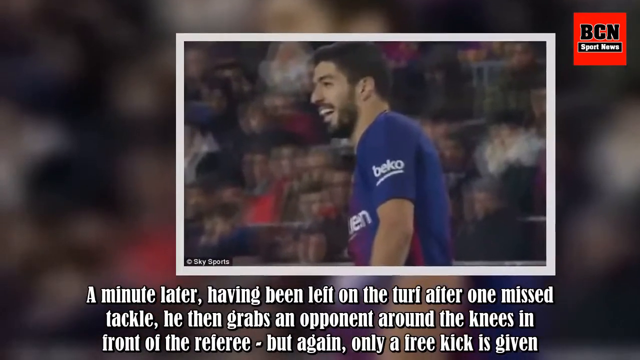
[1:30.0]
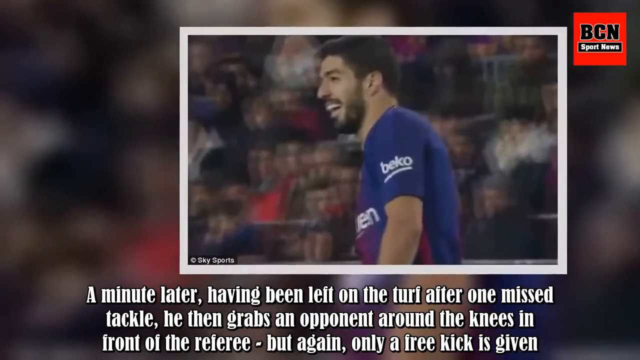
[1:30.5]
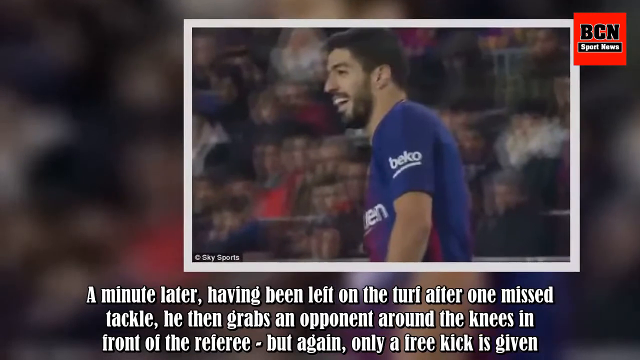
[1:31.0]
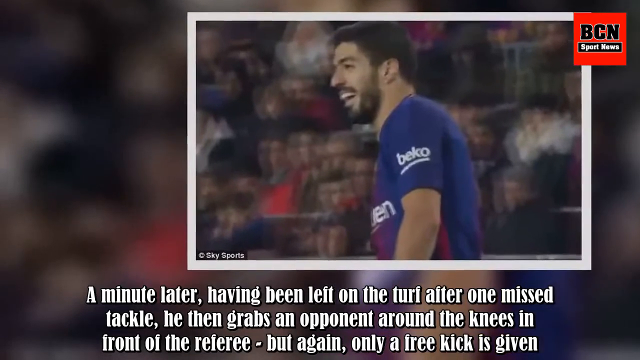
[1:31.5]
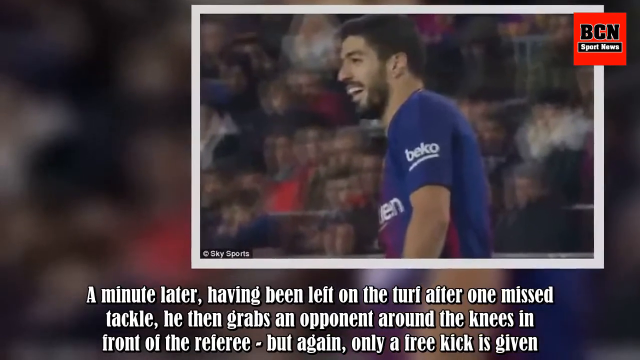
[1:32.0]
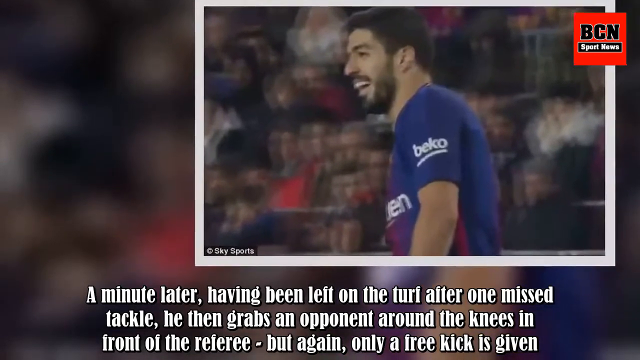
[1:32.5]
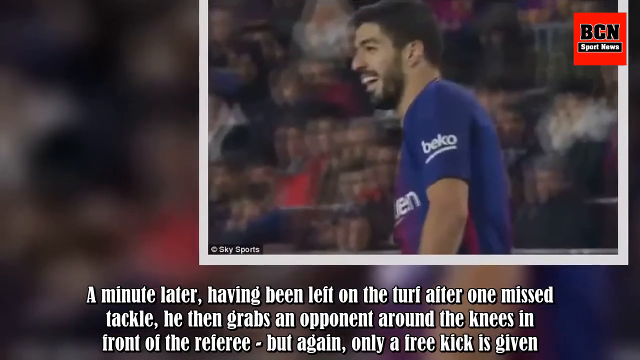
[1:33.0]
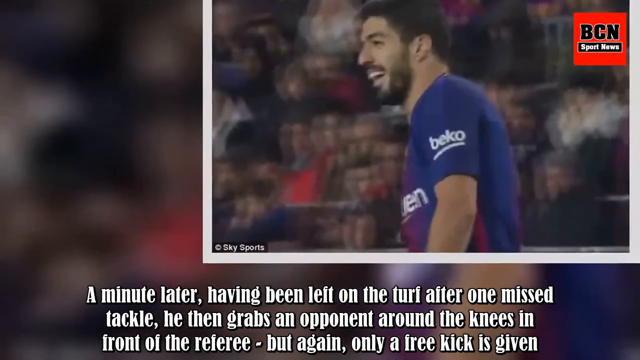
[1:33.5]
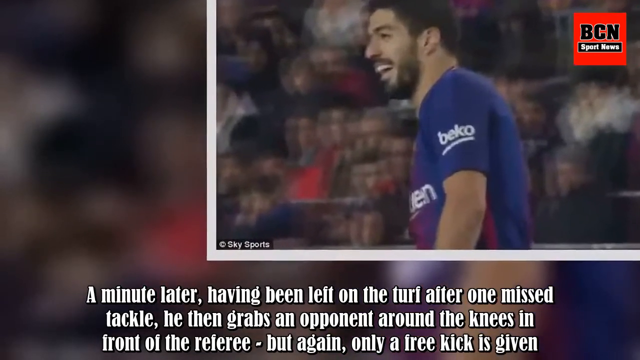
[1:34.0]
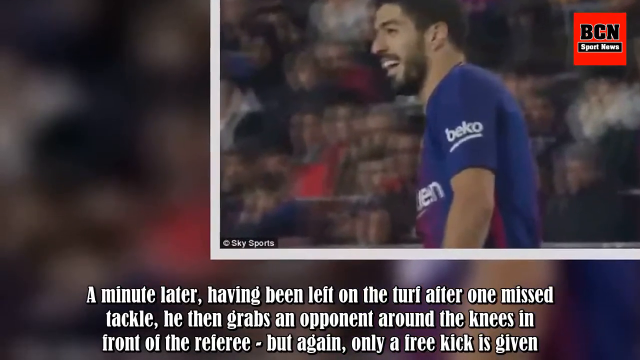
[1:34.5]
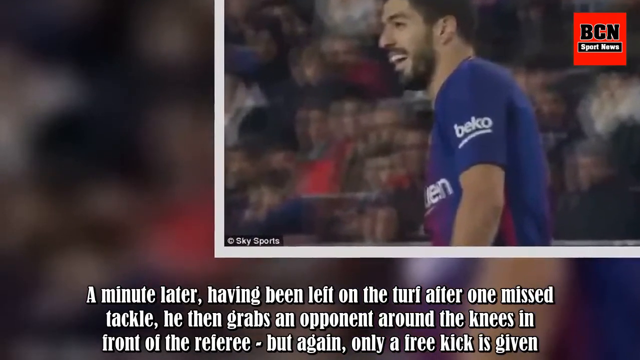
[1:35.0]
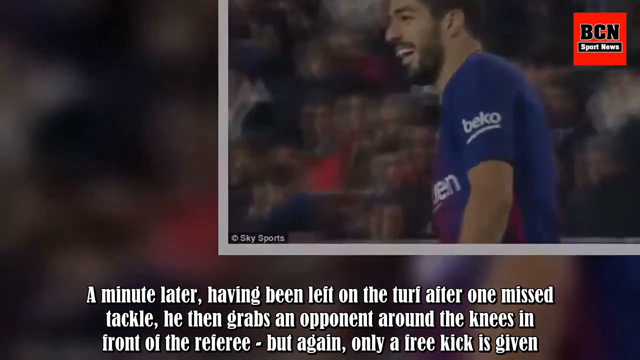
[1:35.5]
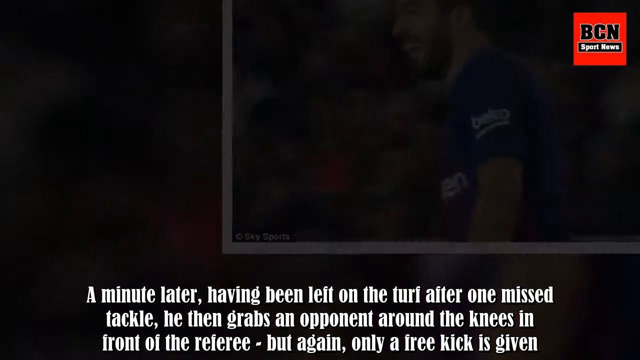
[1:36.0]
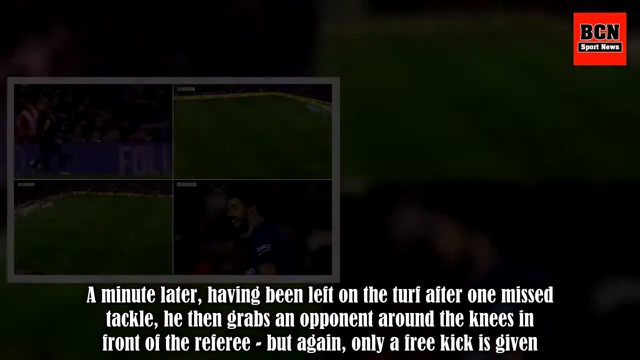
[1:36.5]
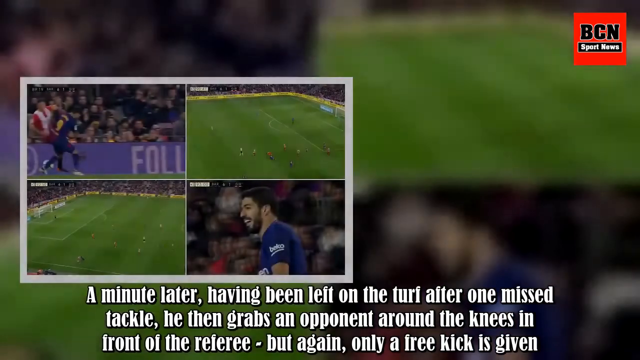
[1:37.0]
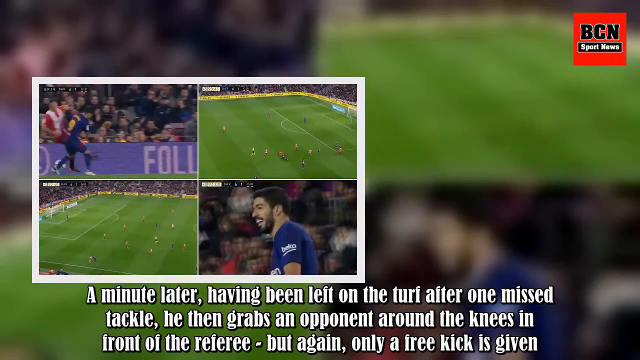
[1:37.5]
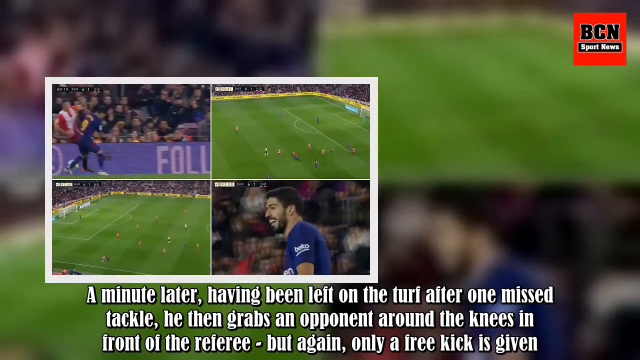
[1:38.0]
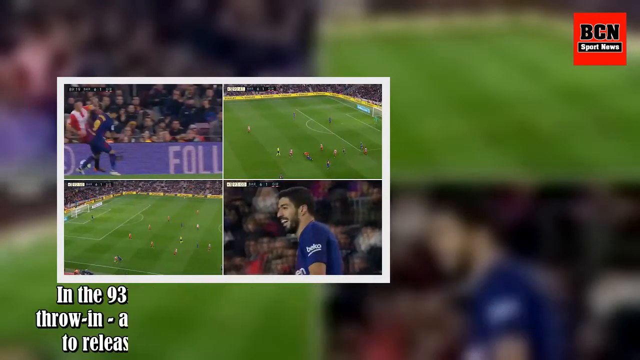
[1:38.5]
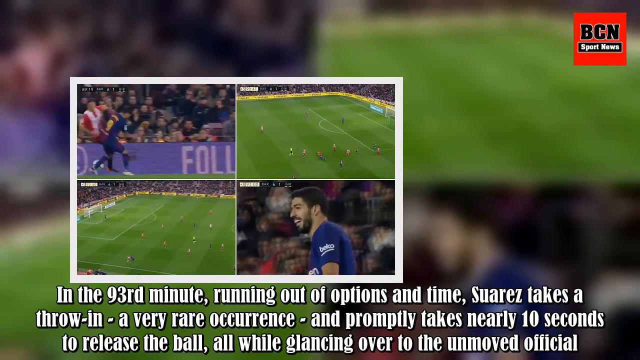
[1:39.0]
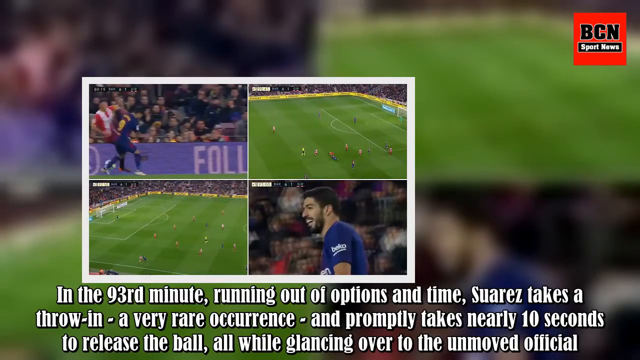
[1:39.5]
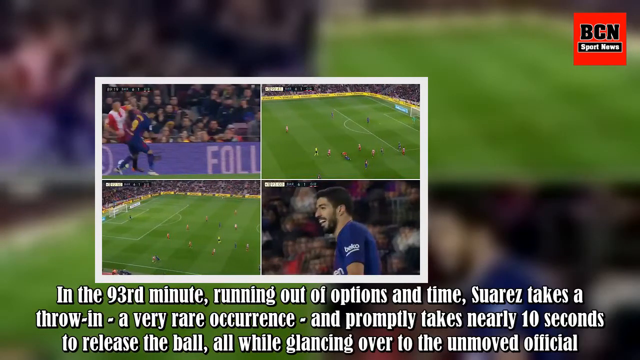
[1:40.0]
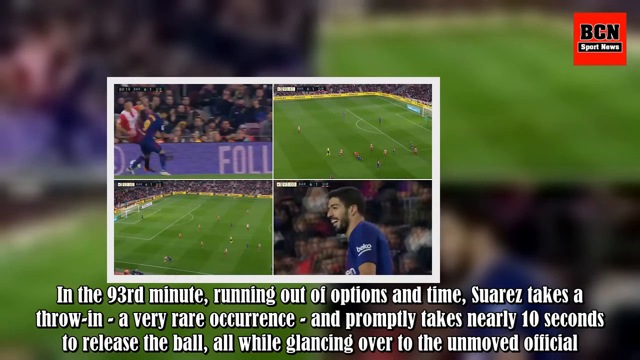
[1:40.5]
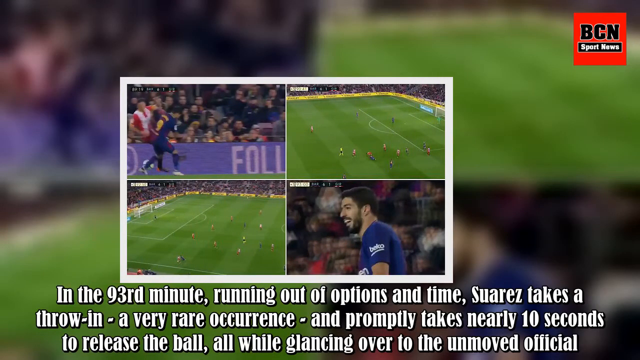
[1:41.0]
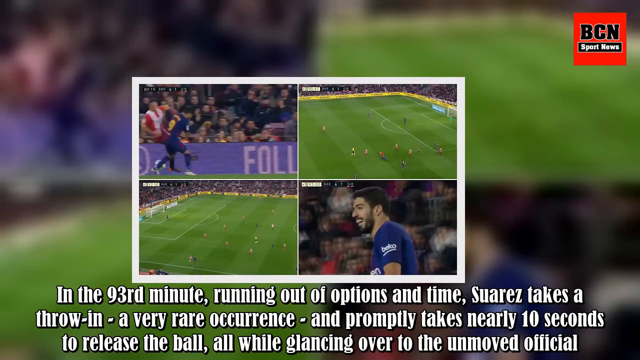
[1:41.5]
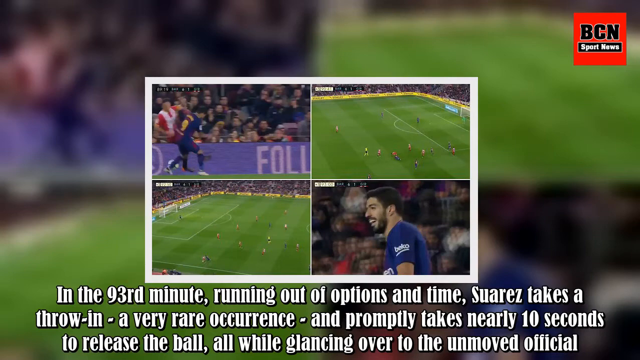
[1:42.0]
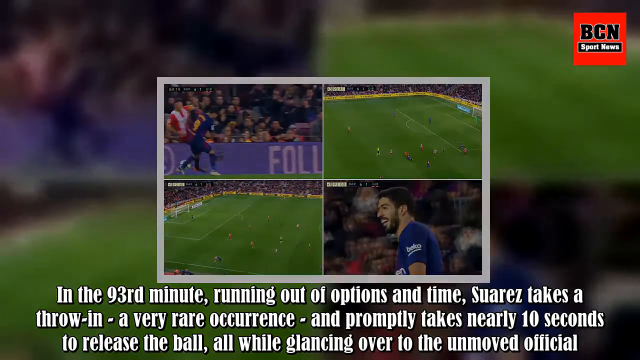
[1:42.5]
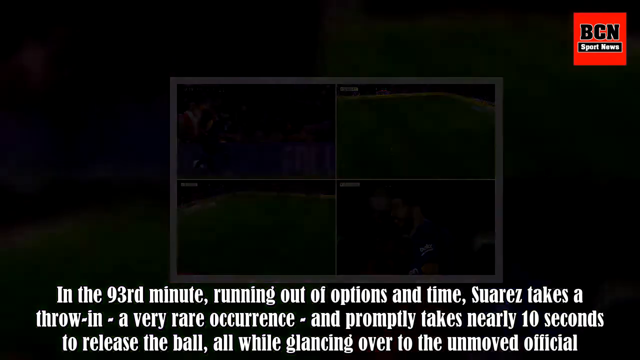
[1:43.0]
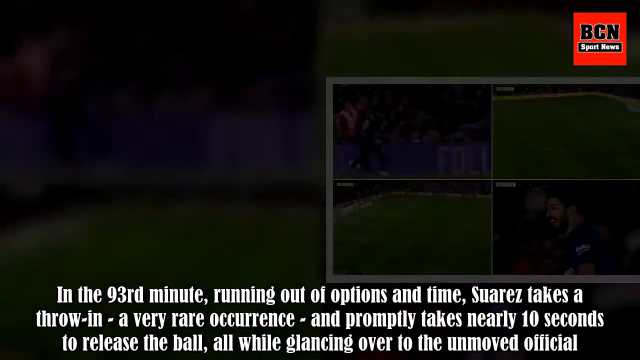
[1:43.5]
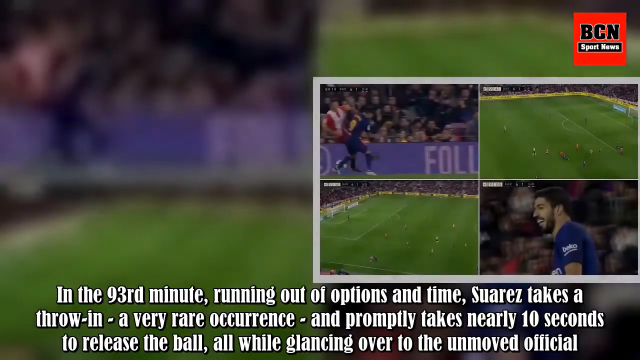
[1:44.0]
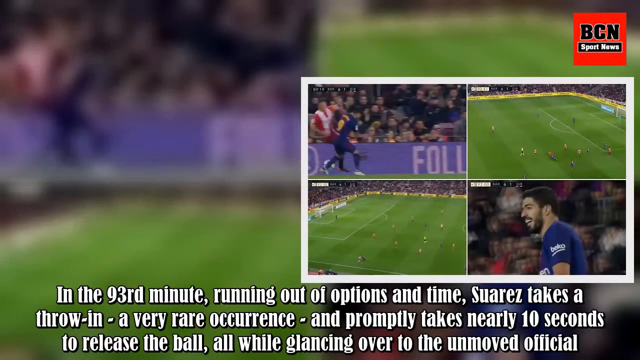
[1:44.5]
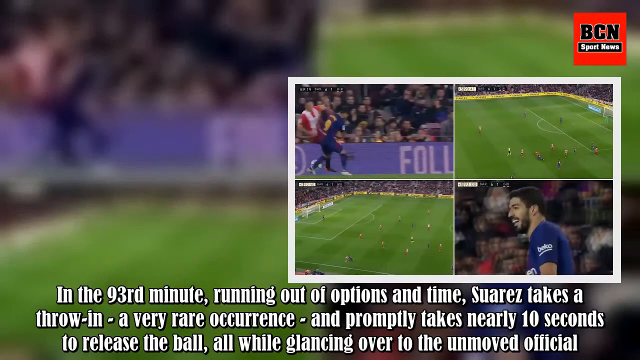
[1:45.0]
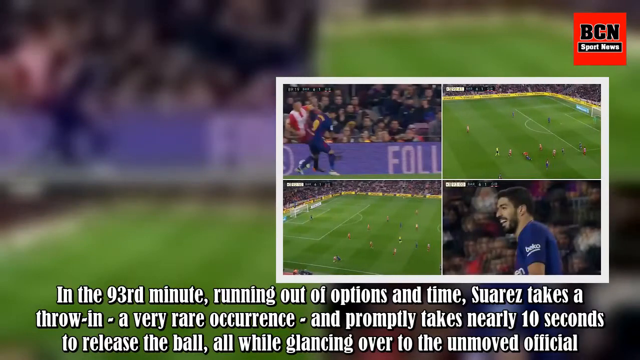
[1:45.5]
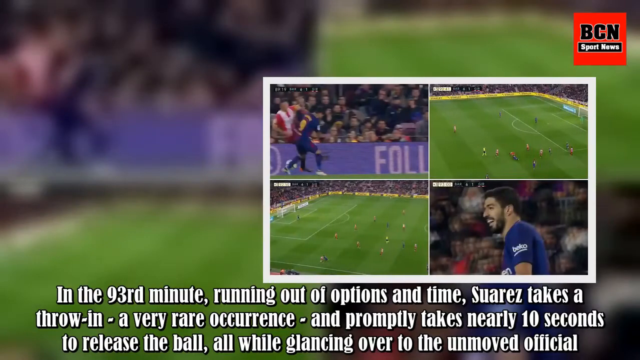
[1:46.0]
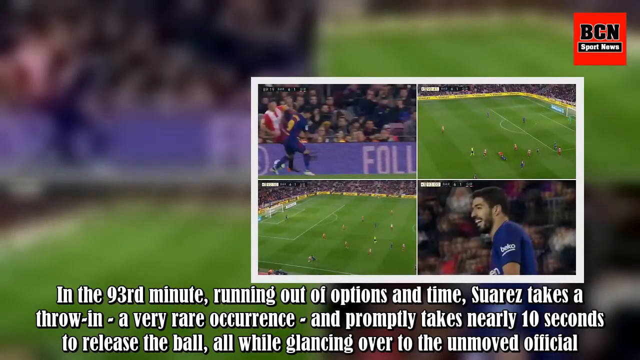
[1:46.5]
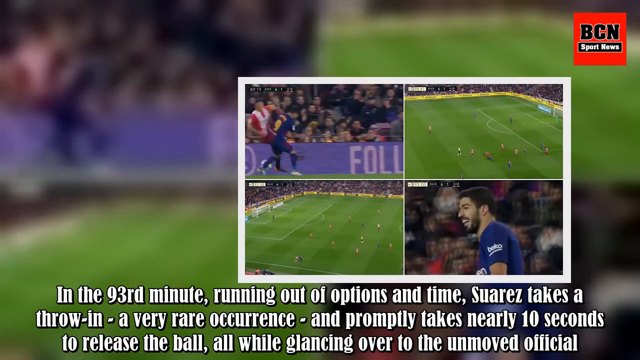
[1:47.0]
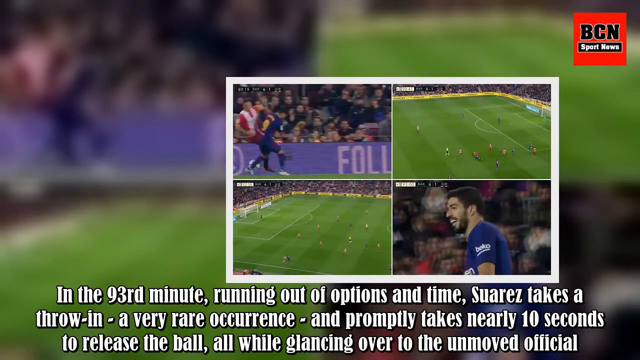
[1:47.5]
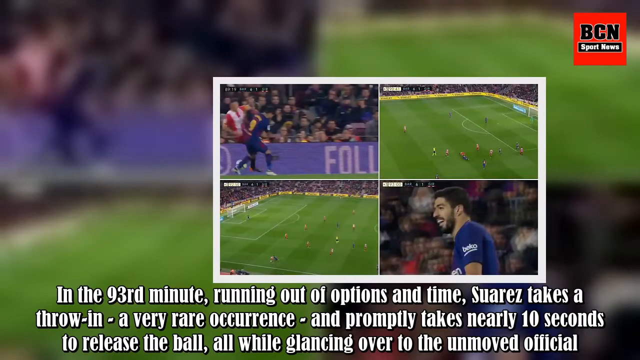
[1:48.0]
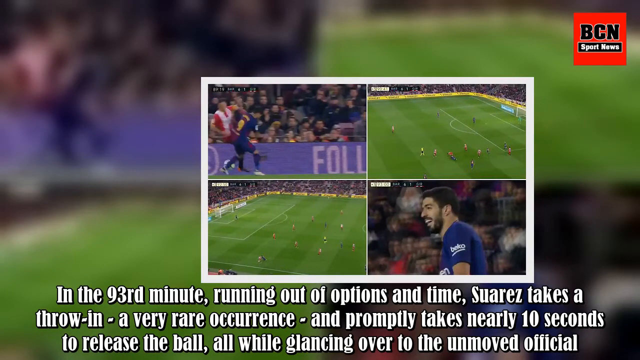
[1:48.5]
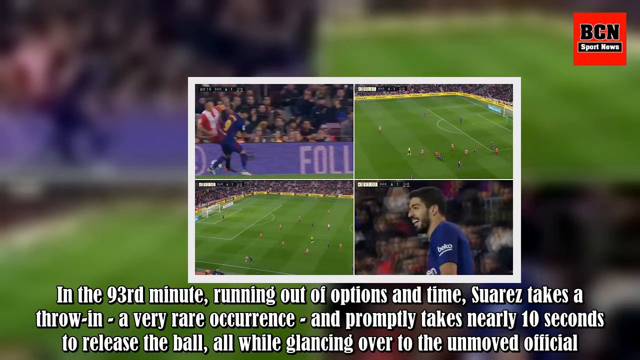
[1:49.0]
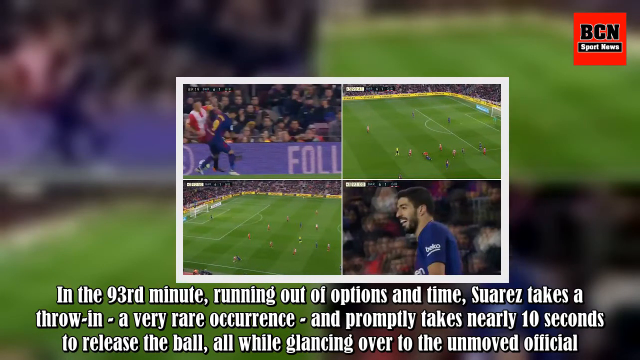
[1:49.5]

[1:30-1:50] An image shows a soccer player wearing what looks like a blue jersey, who appears to be smiling away from the camera. Text at the bottom of the screen reads "a minute later, having been left on the turf, after one missed tackle, he then grabs the opponent around the knees in front of the referee, but again, only a free kick." A collage of pictures from the game is then put together in the middle of the screen, with text at the bottom reading "in the 93rd minute, running out of options and time, Suarez takes a throw in, a very rare occurrence, and promptly takes nearly 10 seconds to release the ball, all while glancing over to the unmoved official." A small emblem reading "BCN Sports News" in a red box is in the corner.